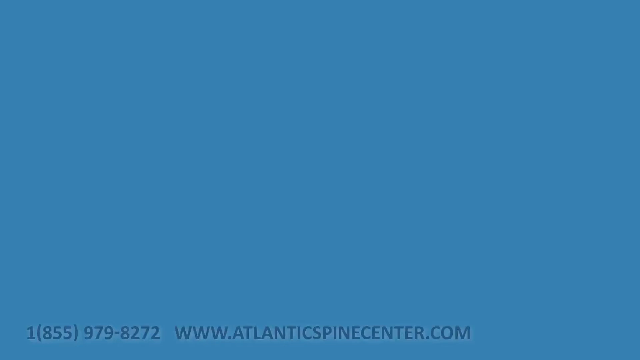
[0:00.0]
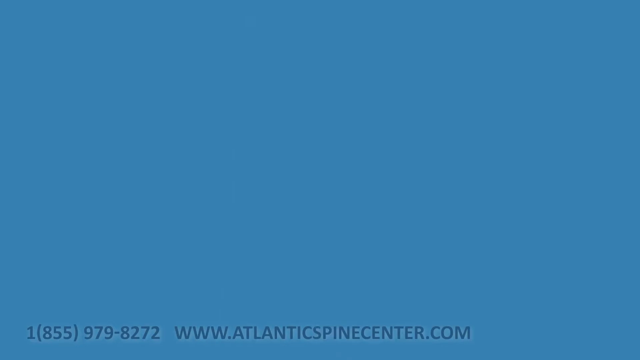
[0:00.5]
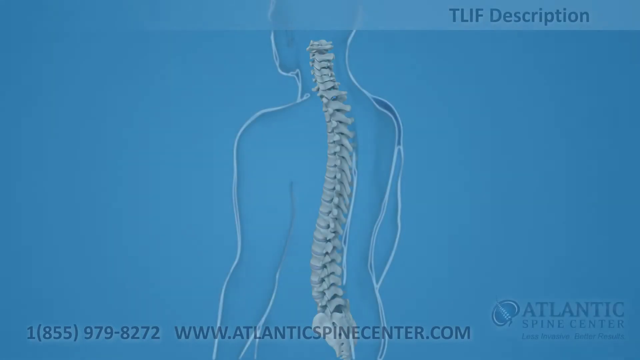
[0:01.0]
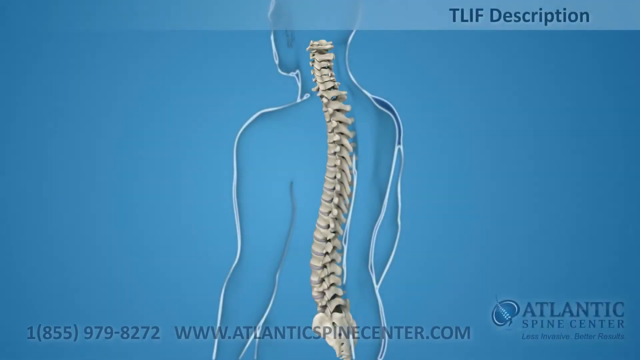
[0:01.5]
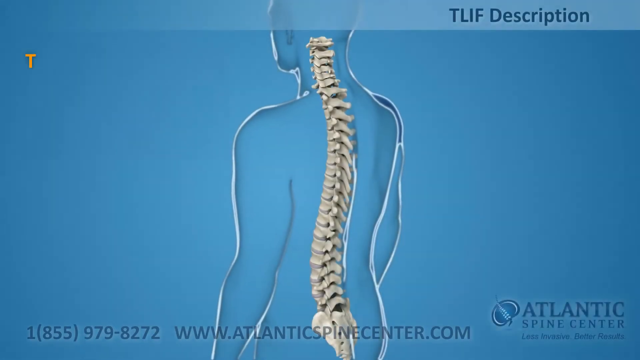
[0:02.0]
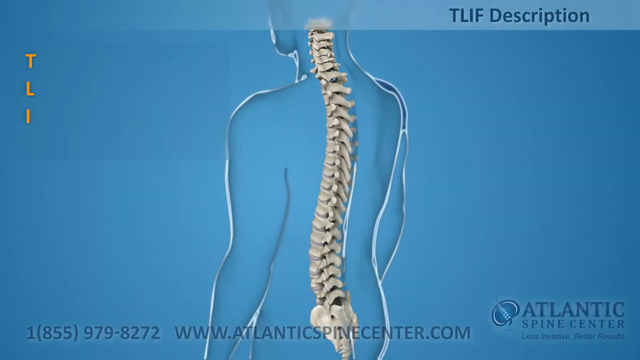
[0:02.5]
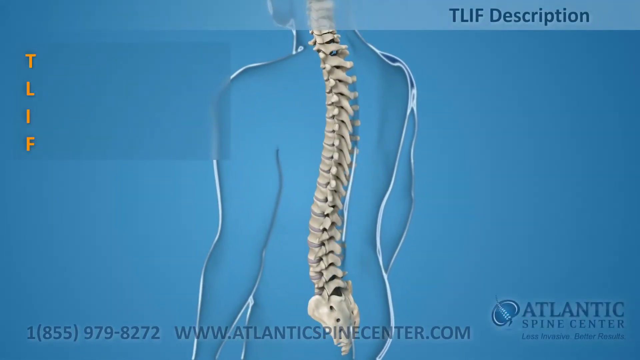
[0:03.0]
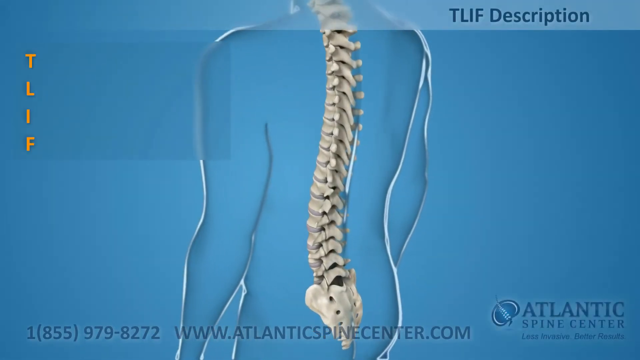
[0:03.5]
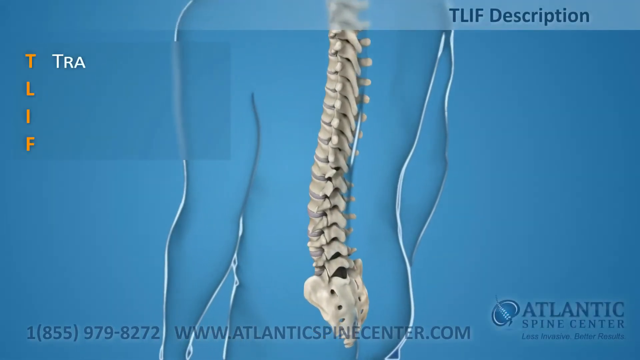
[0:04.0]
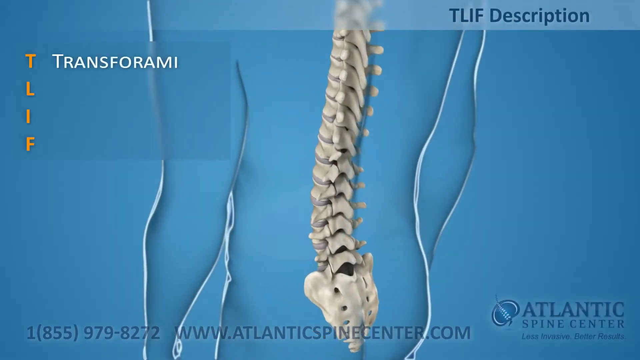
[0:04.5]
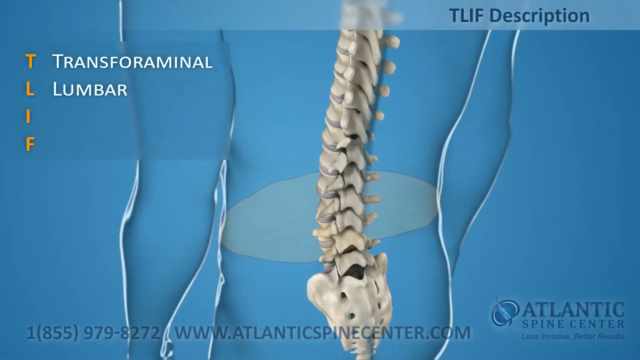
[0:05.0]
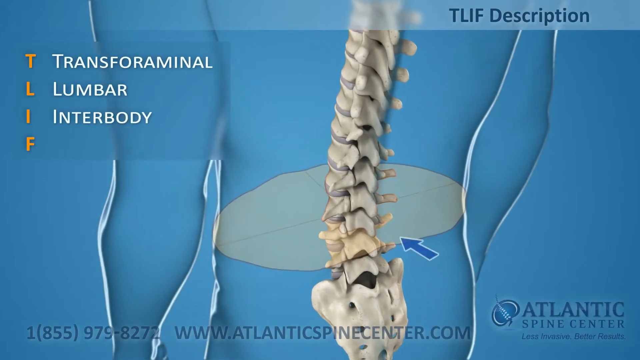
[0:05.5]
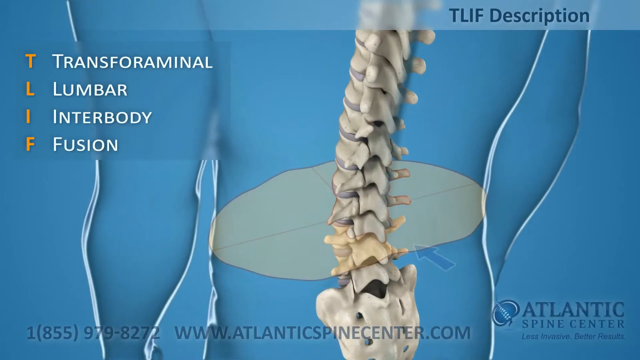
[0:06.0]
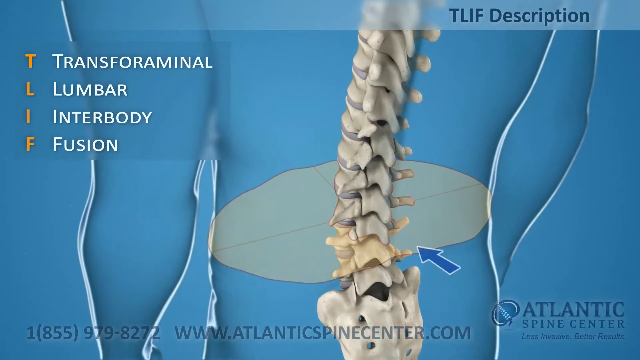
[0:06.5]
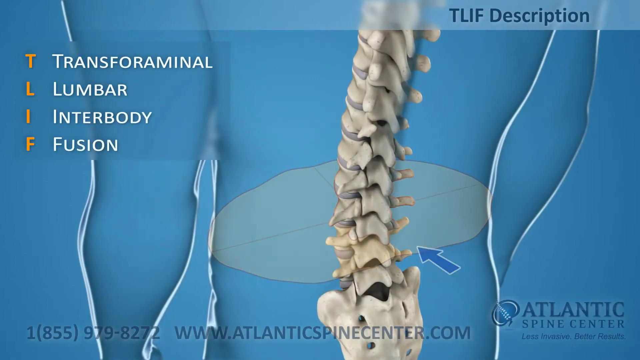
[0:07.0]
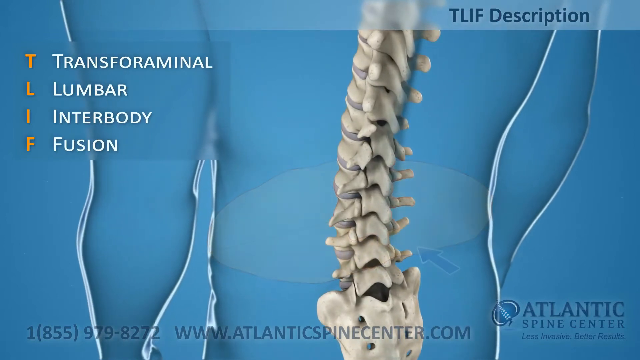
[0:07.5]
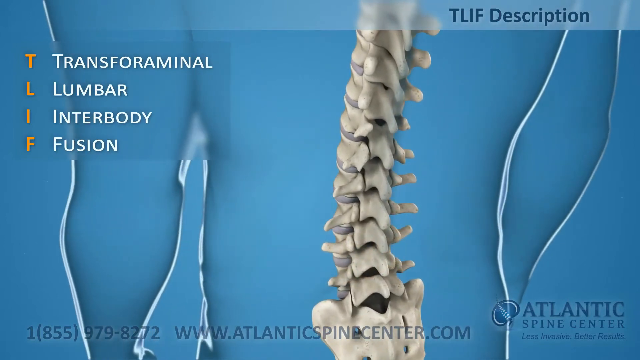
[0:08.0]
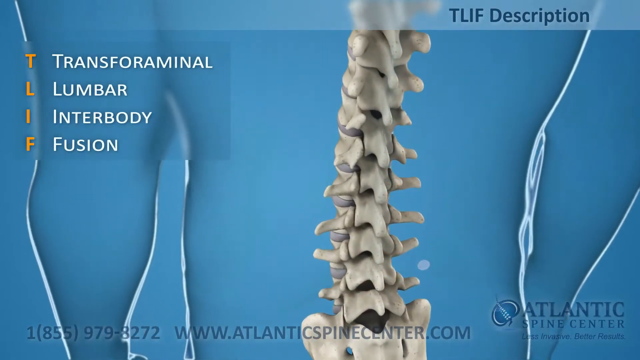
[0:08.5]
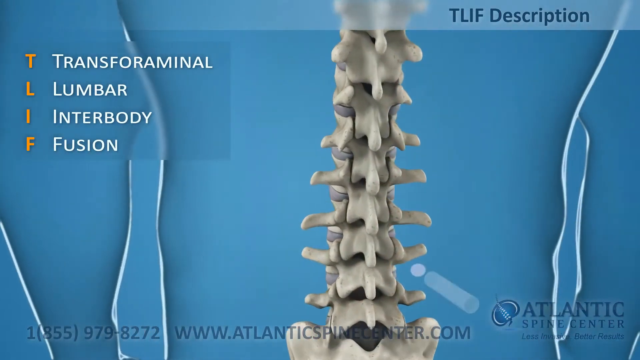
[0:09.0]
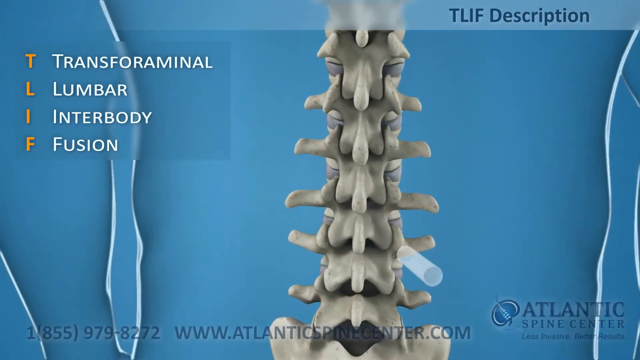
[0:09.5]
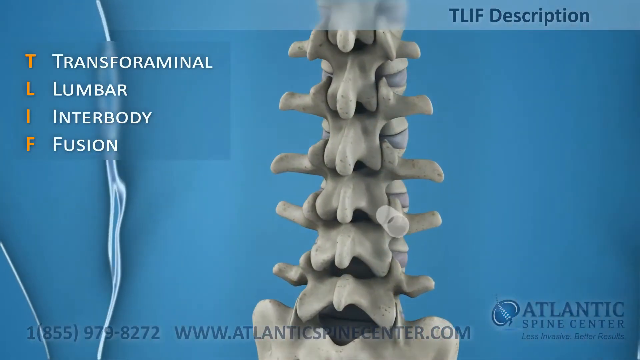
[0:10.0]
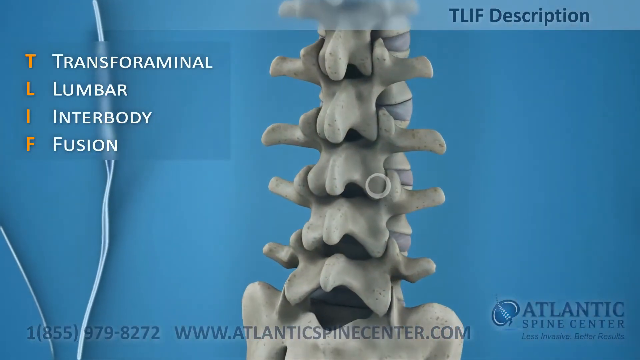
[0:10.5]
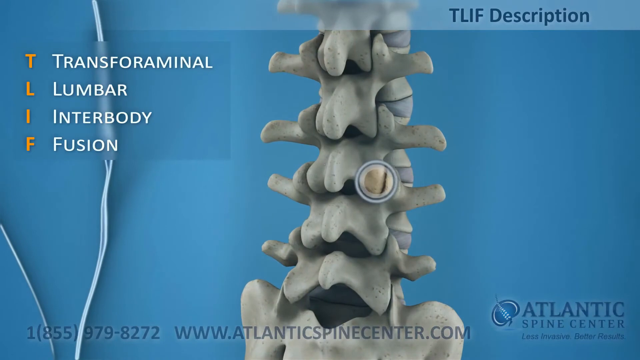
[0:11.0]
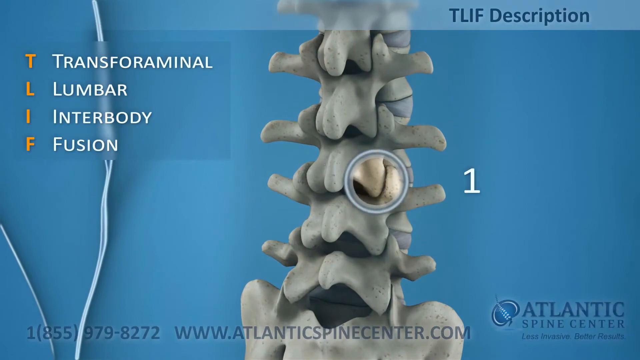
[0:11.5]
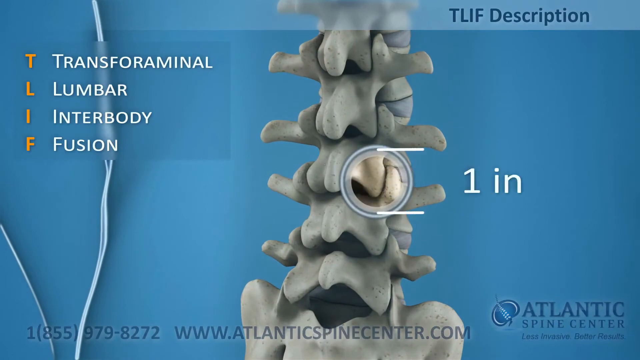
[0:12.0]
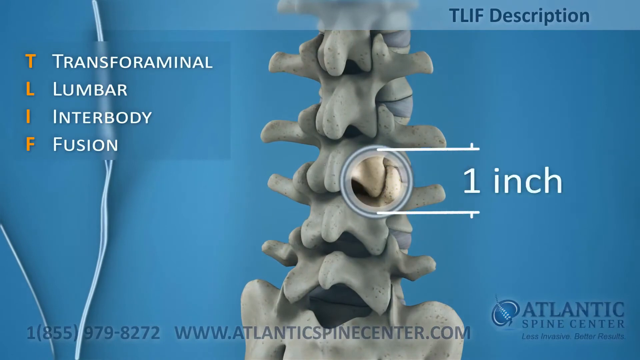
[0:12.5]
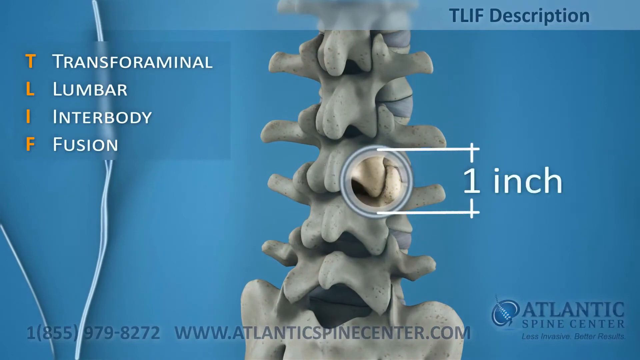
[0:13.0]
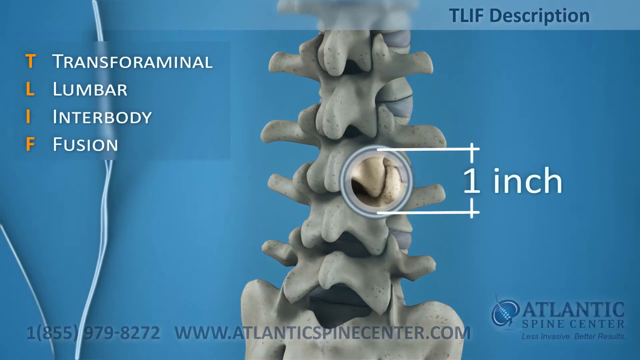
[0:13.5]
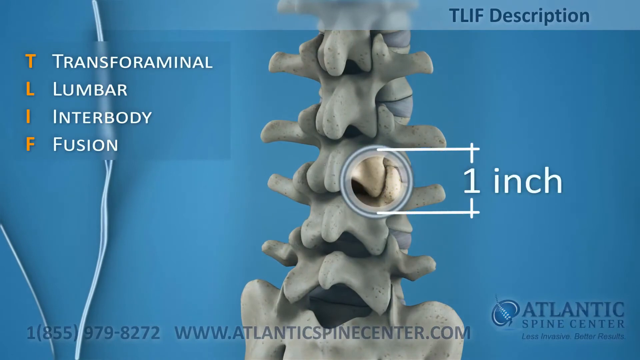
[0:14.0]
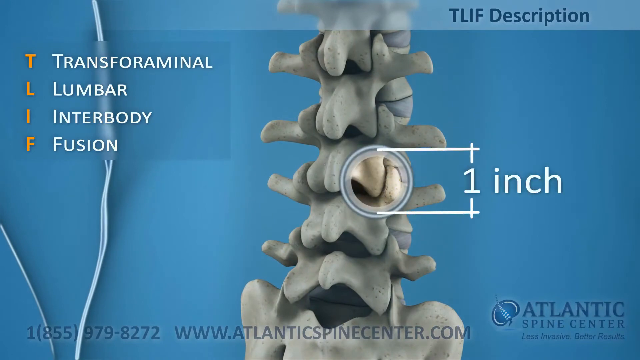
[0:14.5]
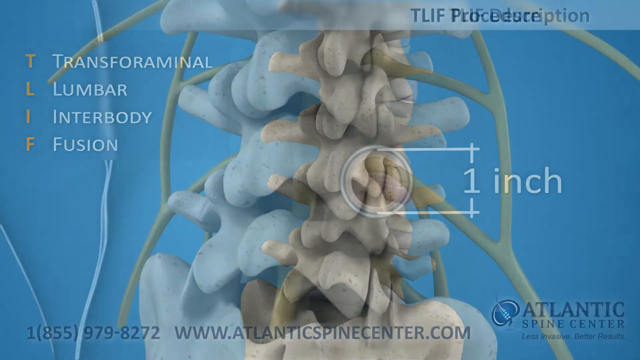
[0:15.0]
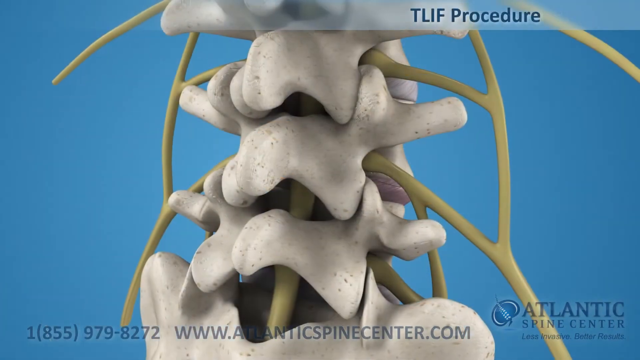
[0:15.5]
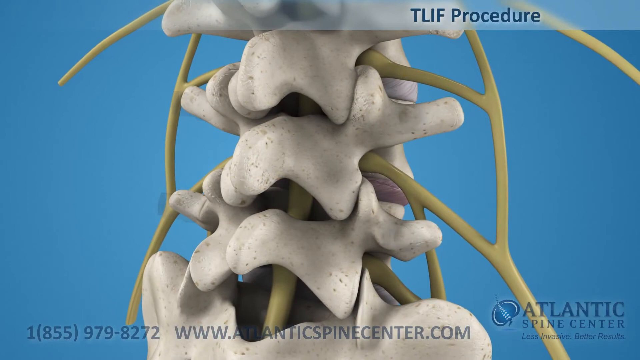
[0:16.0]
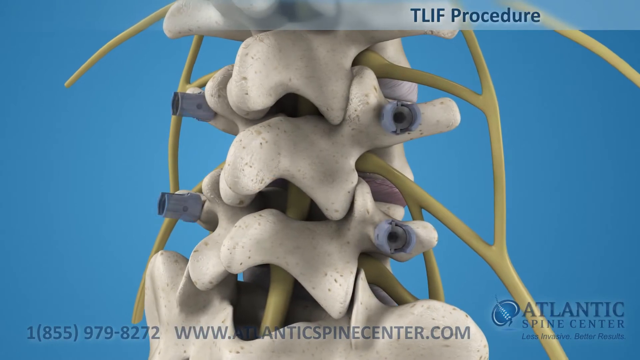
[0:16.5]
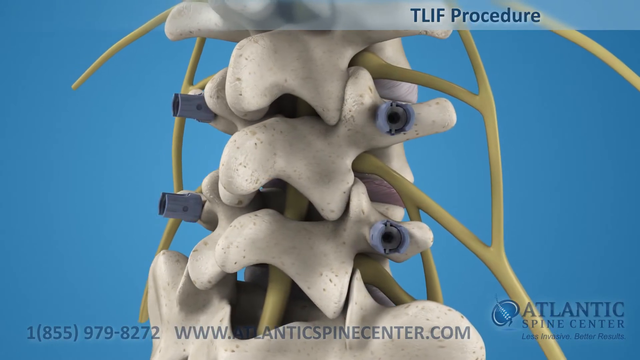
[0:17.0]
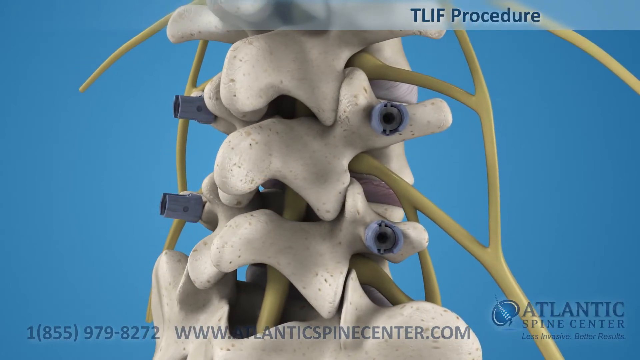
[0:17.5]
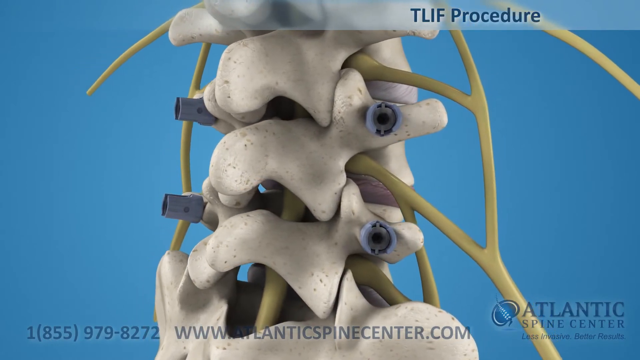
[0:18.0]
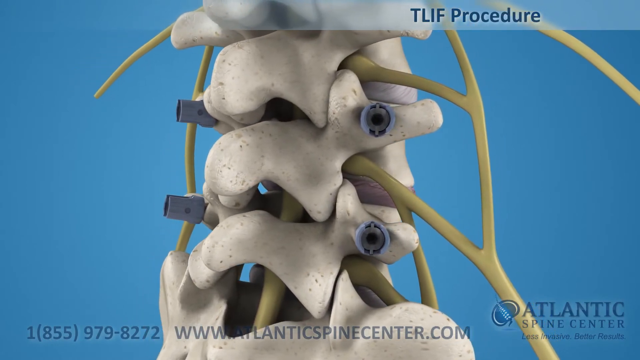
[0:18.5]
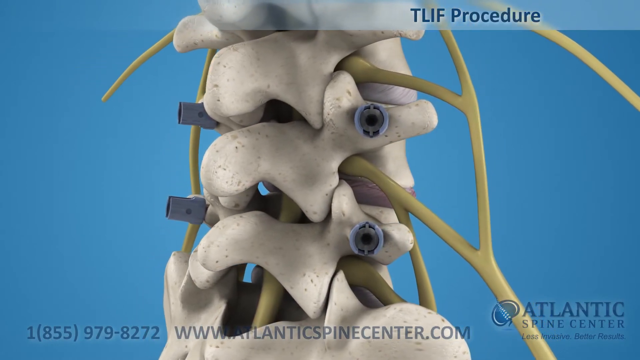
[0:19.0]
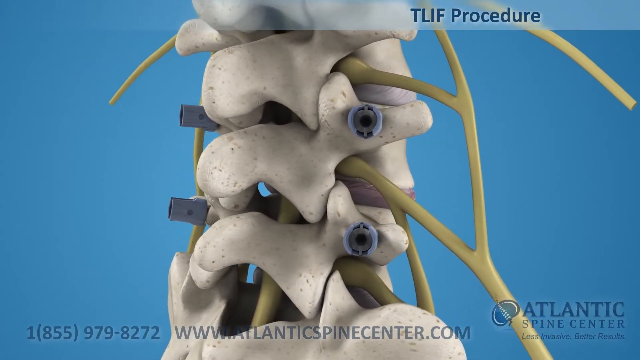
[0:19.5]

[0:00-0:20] The video begins with an image of a person's silhouette standing sideways, facing the left side of the screen, with a spine shown on it. The image stays in motion, slowly turning and zooming in until the view is of the posterior of the silhouette. The letters "T-L-I-F" enter the screen one by one and form a column; they are a bright yellow, almost goldenrod color. A close-up of the spine follows, apparently getting very close to the lower spine area. Words including "lumbar," "interbody," and "fusion" then enter the screen in white lettering, arranged in a column. The view keeps moving closer, showing a close-up of the disc and the vertebrae in the lower back. Zoomed in on the disc in the lower back, a blue arrow appears pointing at the disc, and a white circle appears around a disc area on the lower right side of the vertebrae, showing that it measures 1 inch. Next, two blue medical devices are shown placed on the right side of the vertebrae and two on the left side, with nerves entering and exiting the vertebrae on each side.